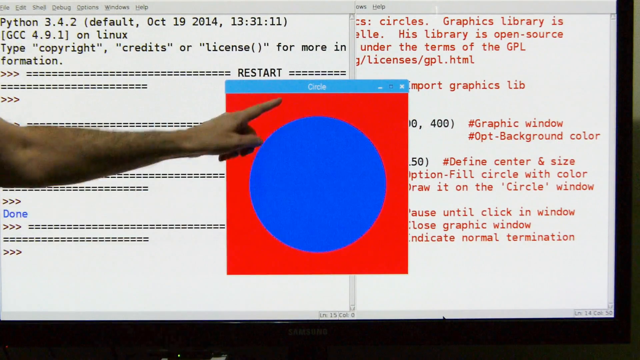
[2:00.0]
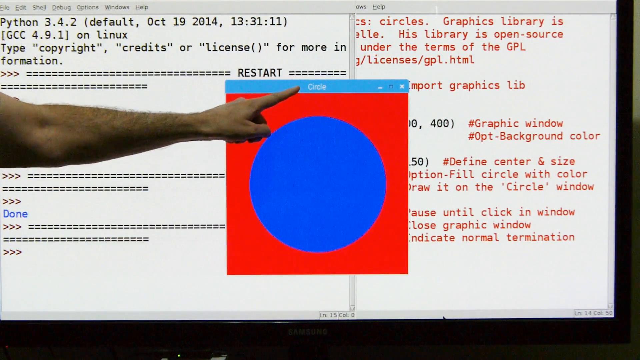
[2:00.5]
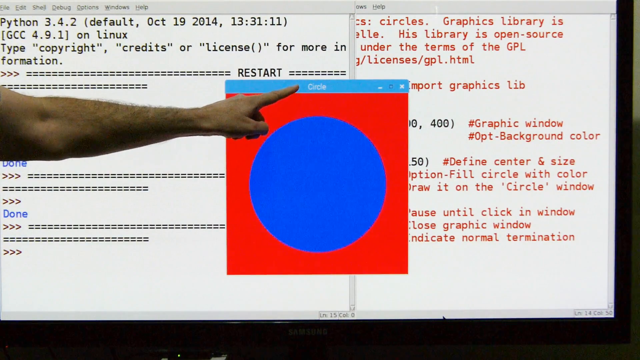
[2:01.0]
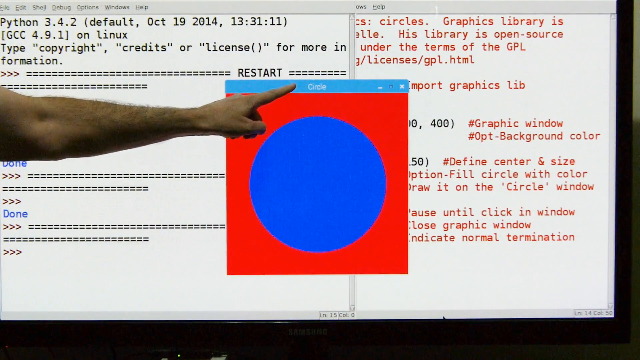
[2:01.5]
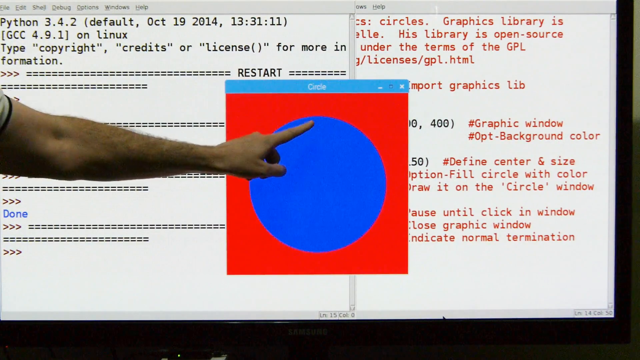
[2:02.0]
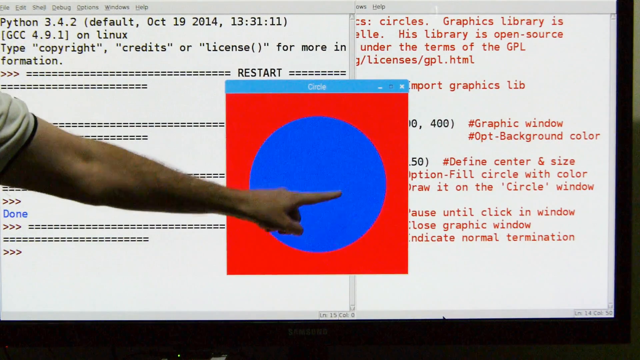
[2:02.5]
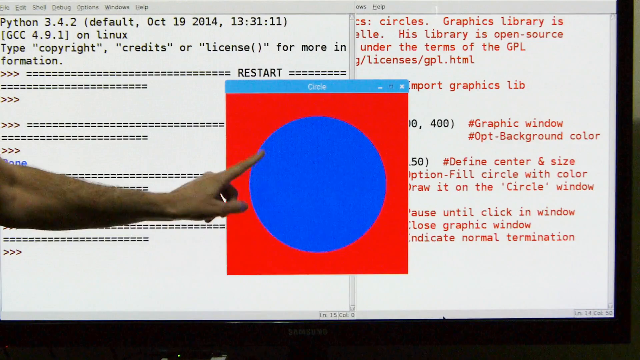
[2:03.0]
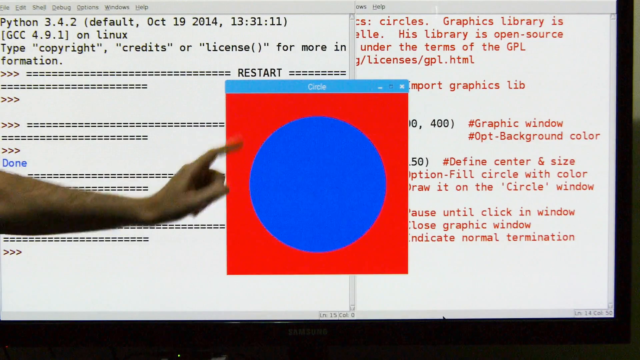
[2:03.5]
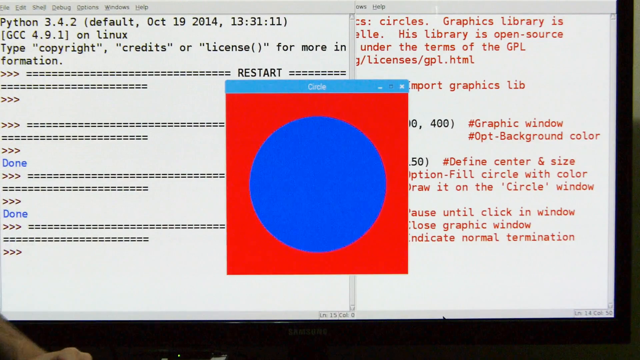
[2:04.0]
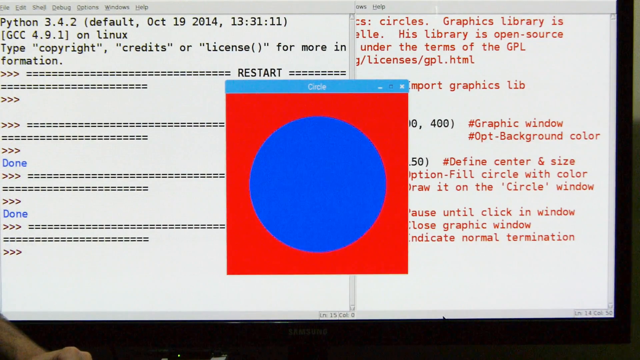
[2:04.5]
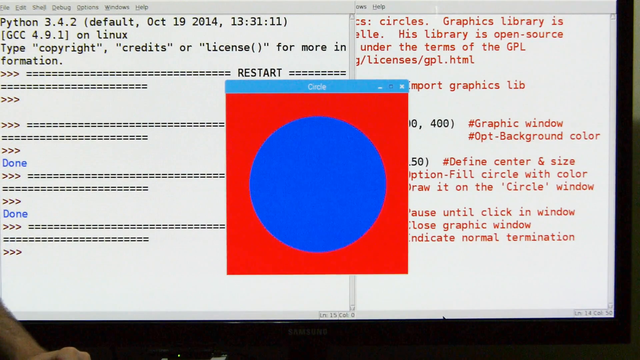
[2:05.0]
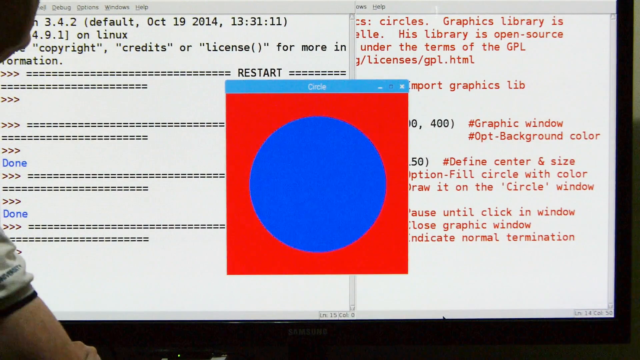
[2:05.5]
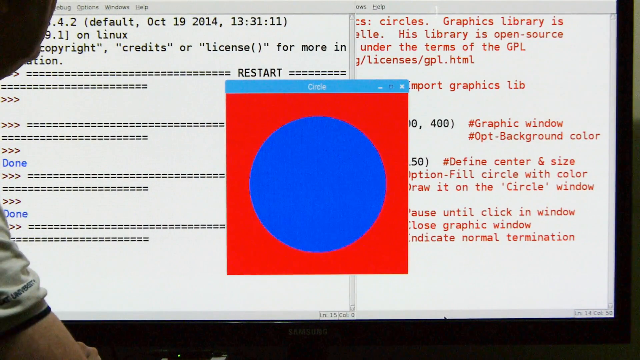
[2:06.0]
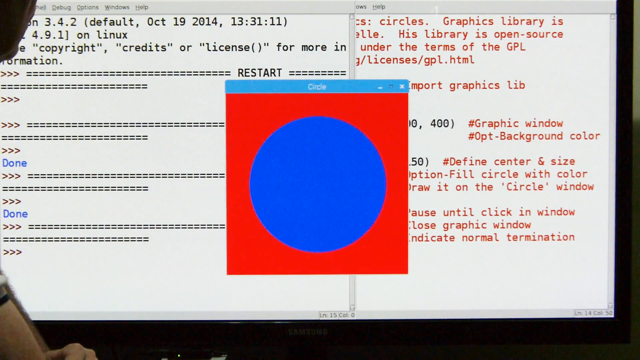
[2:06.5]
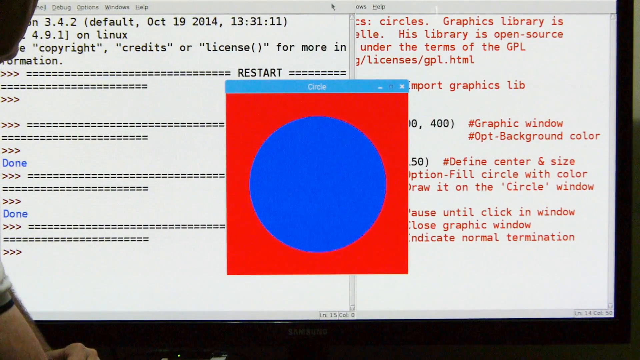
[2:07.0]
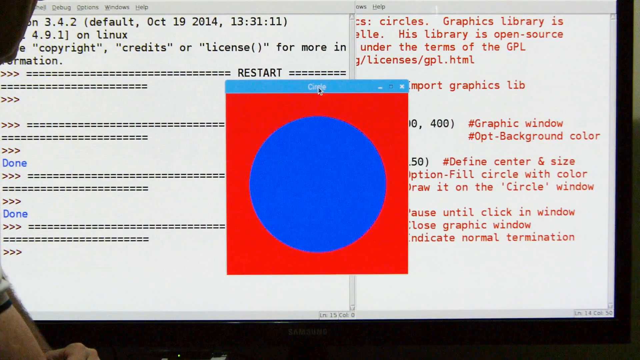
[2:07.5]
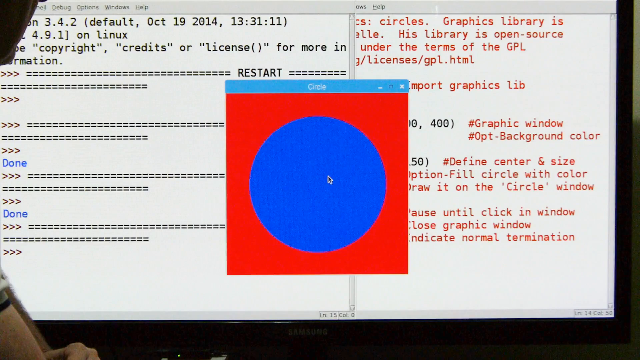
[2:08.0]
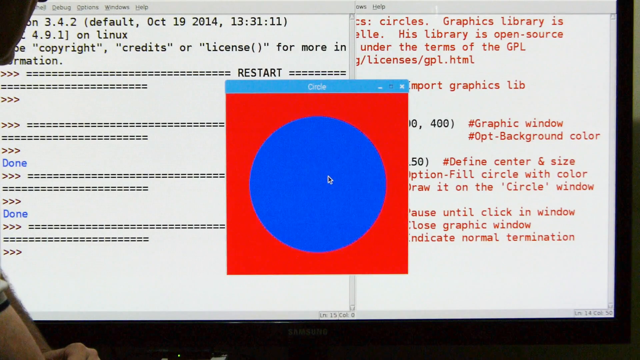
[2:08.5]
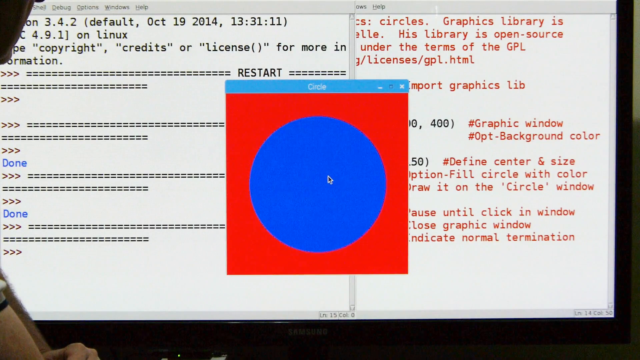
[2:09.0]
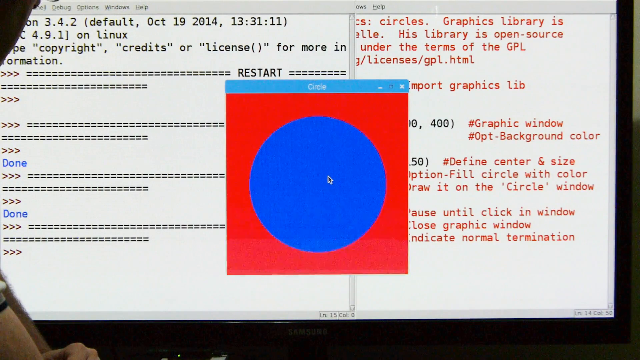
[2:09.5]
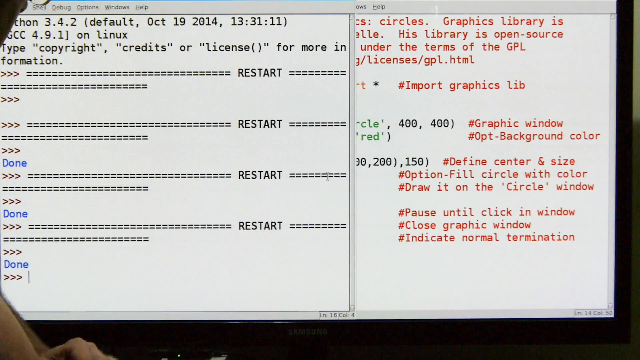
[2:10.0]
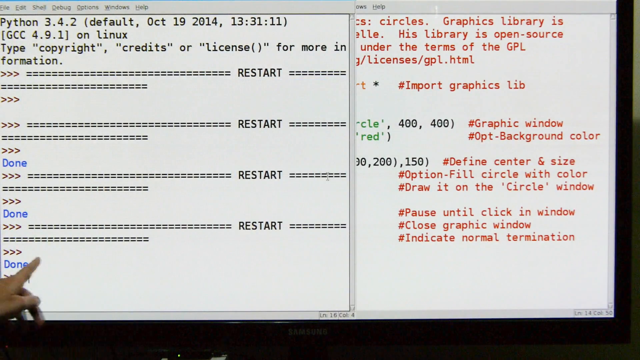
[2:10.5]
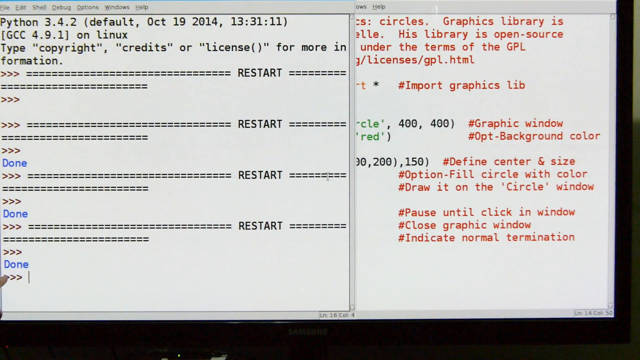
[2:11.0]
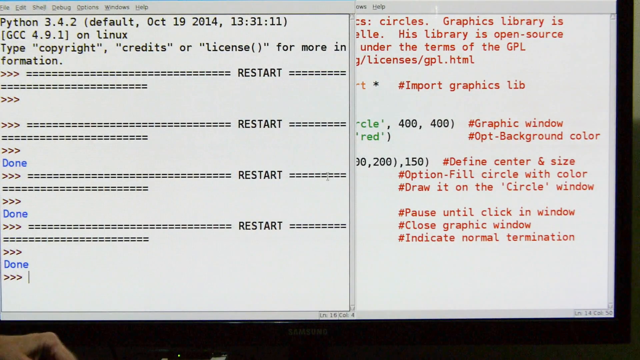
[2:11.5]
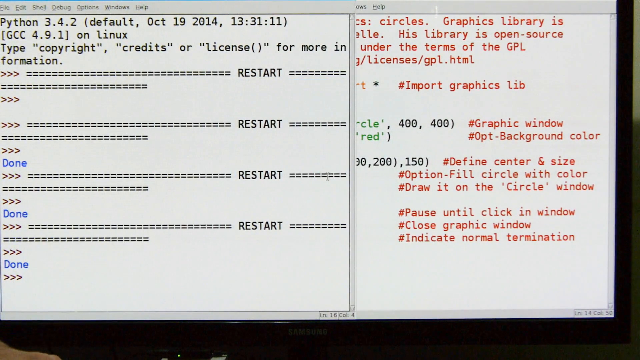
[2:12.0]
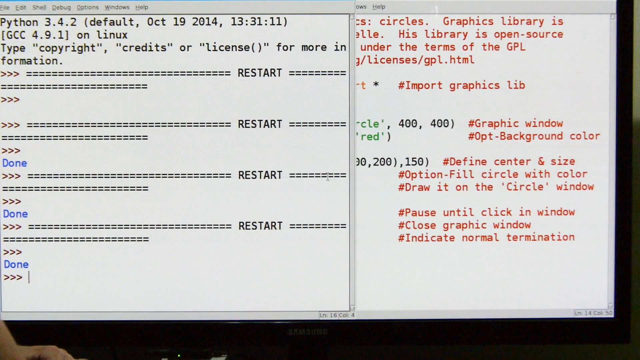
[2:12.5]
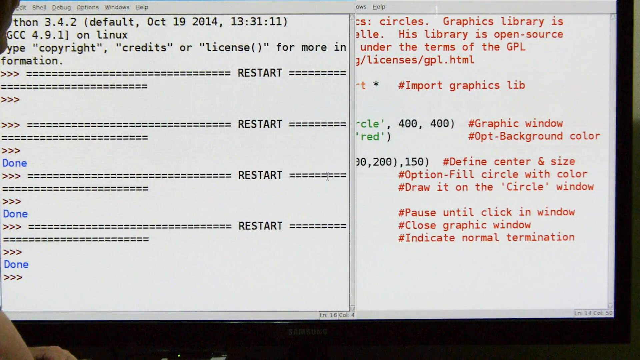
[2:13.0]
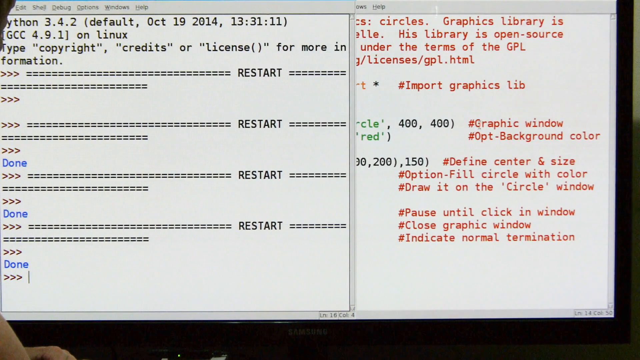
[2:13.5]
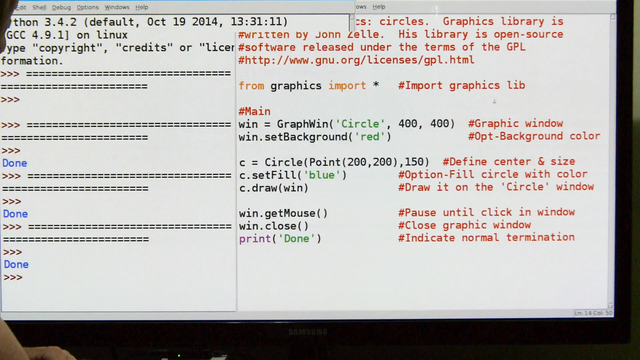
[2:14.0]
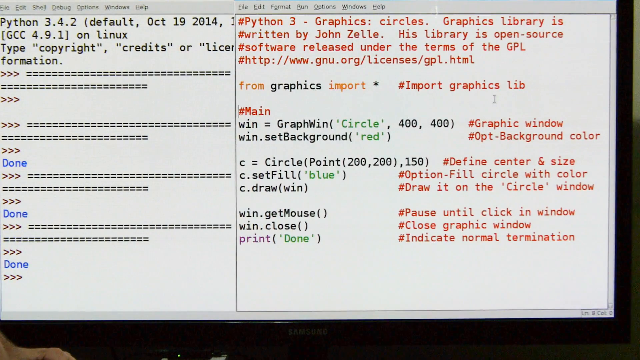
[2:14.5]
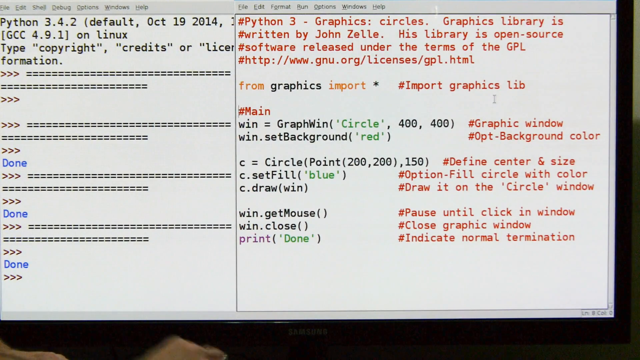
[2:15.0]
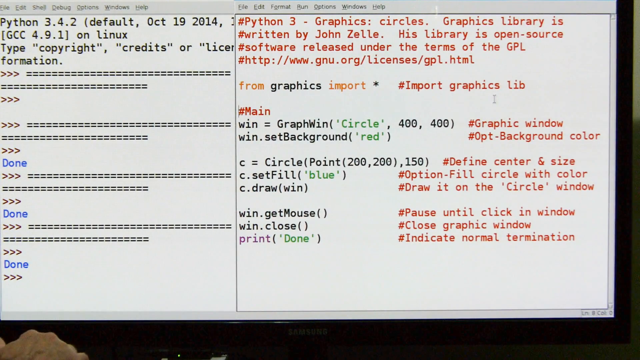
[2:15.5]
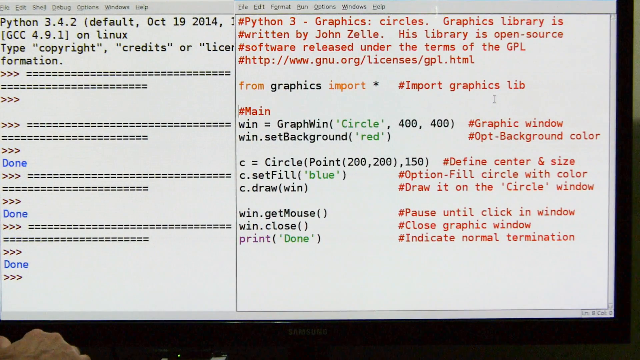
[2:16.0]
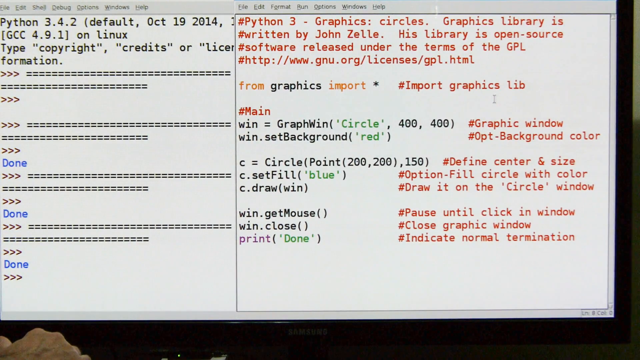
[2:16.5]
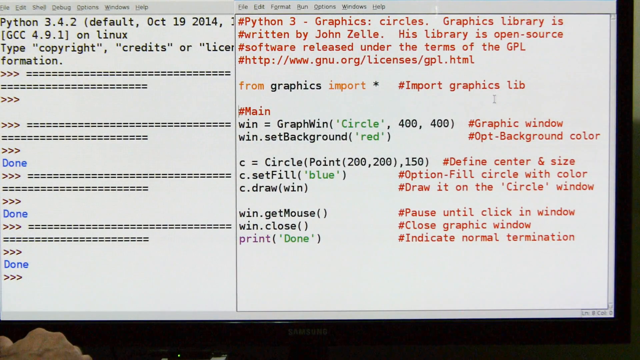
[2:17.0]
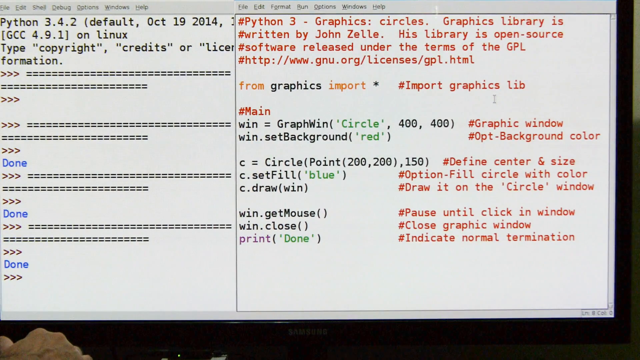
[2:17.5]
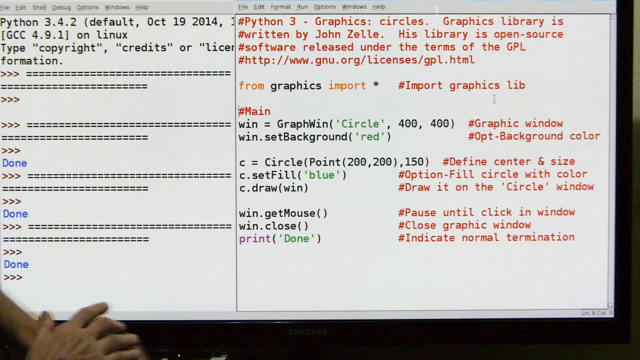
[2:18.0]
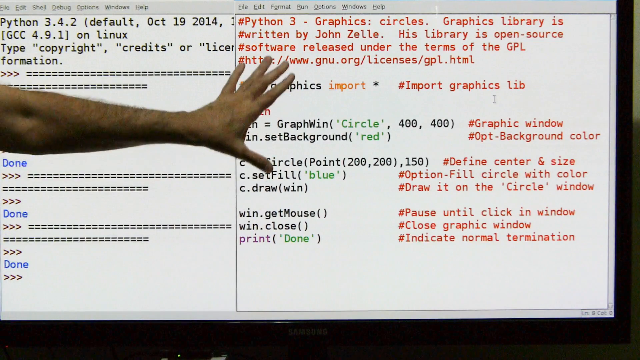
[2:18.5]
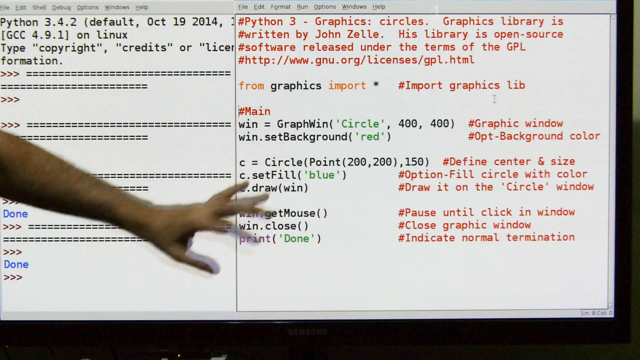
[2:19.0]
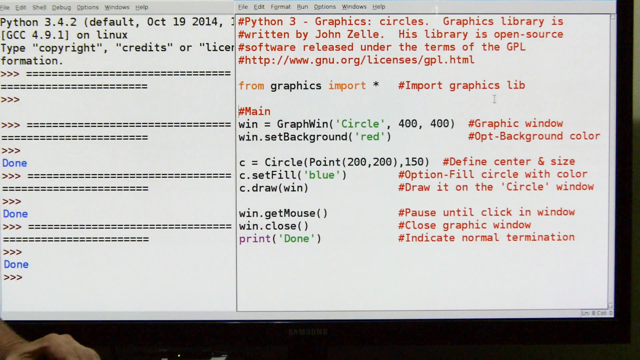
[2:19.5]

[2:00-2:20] The teacher continues explaining in what looks like a wrap-up. The left board shows the program, Python 3.4.2, along with the date and time and the type of the program. Maroon arrows point to the right, and the word "done" is written in blue three times on the left side. The Python code is still shown: "Python 3 graphics circles," a graphics library written by John Seeley, open source software released under the terms of the GPL, "from graphics import," graphics lib, the main graphics window circle 400 by 400, the optional filling of the circle with blue, and the background filled with red.